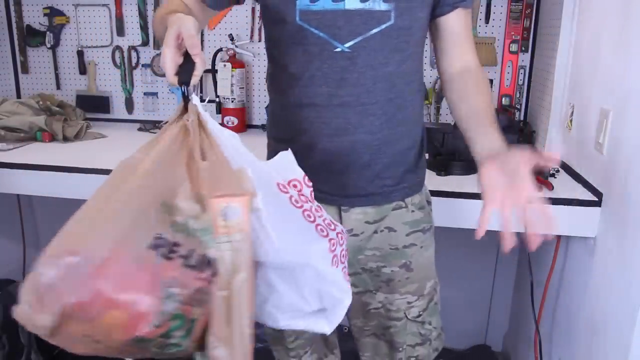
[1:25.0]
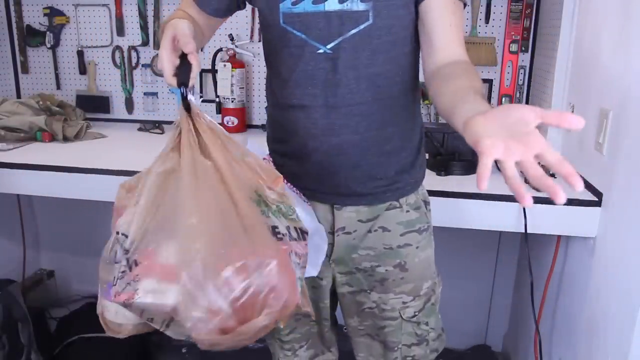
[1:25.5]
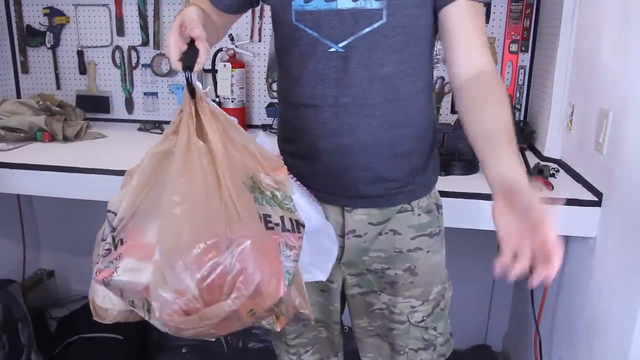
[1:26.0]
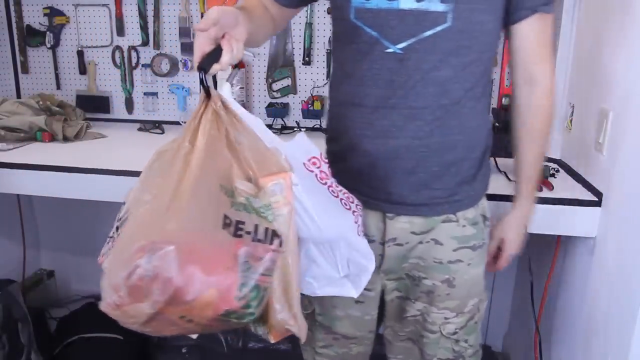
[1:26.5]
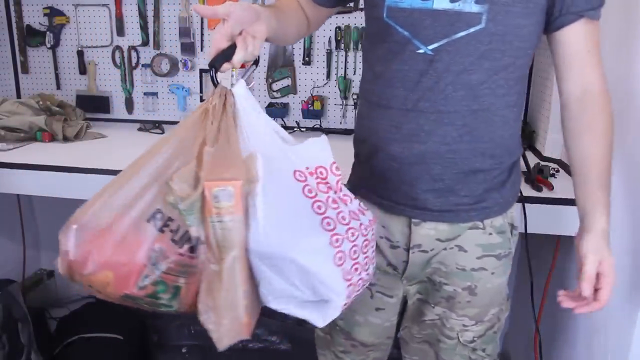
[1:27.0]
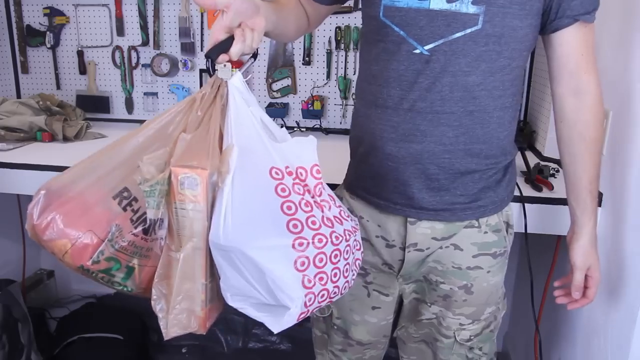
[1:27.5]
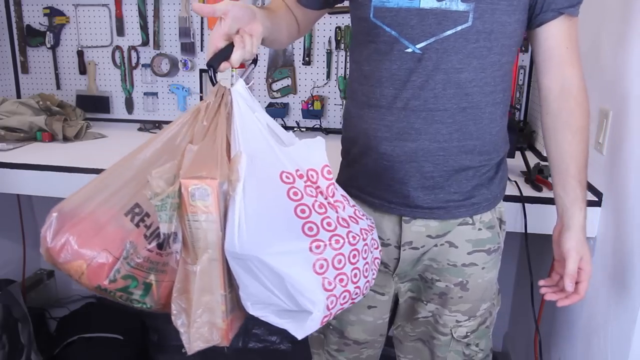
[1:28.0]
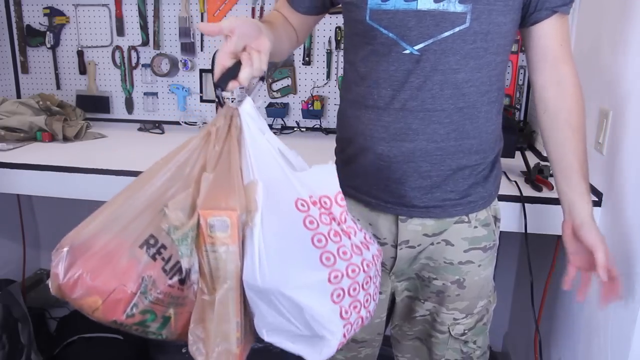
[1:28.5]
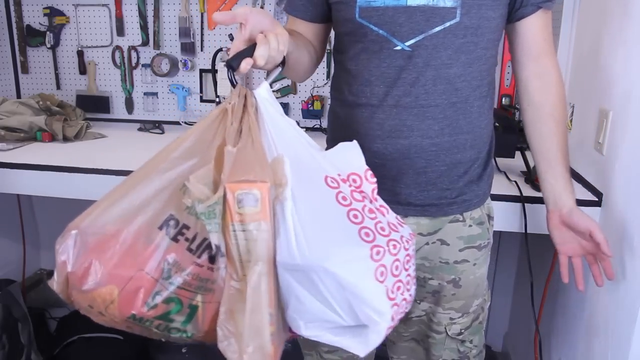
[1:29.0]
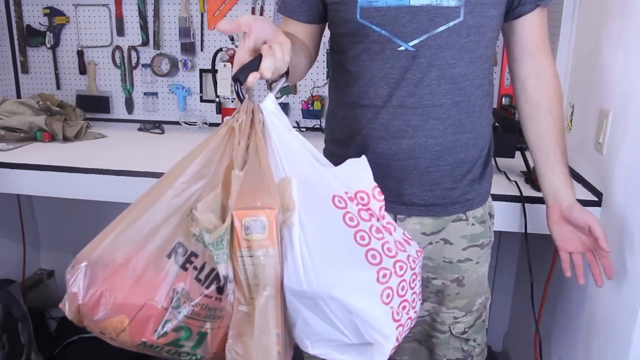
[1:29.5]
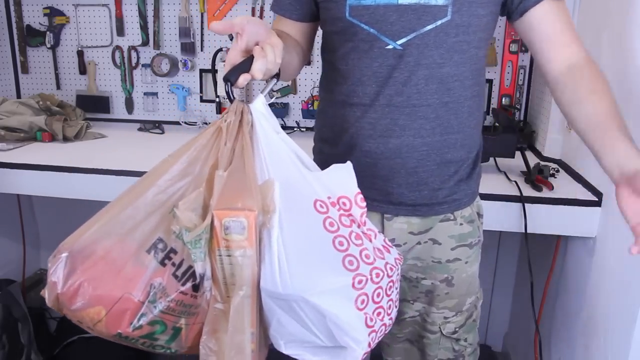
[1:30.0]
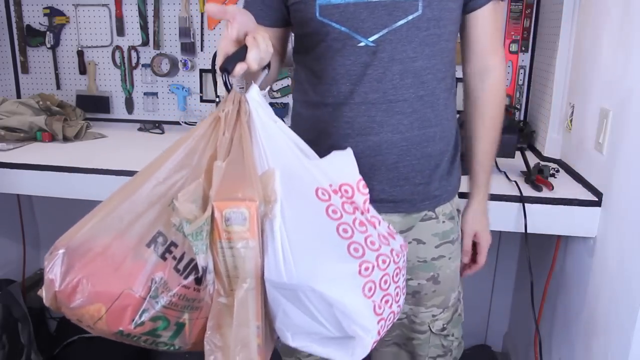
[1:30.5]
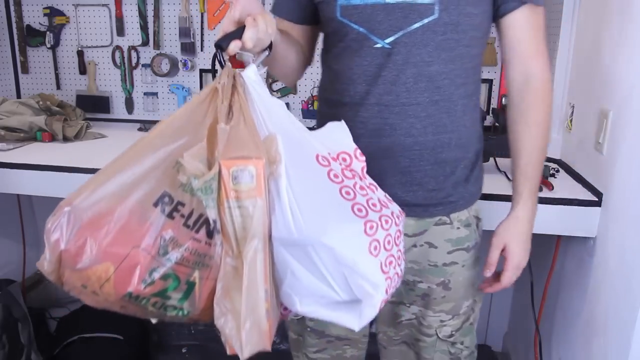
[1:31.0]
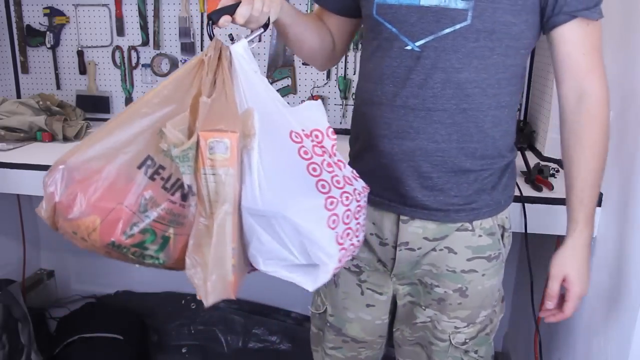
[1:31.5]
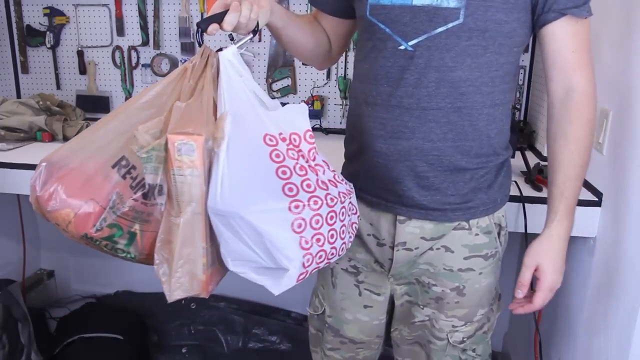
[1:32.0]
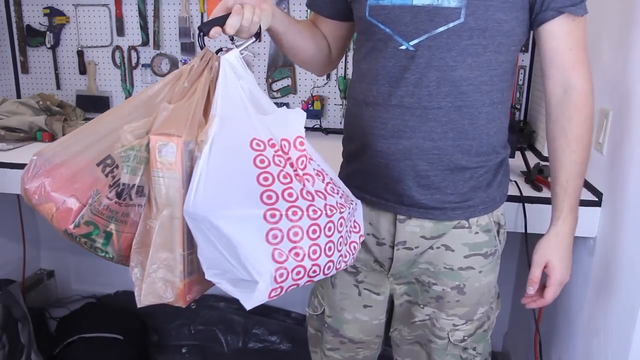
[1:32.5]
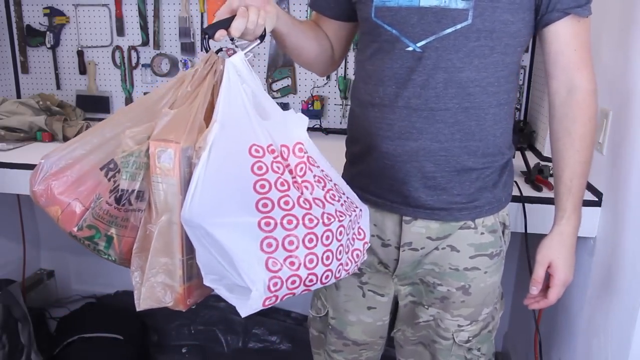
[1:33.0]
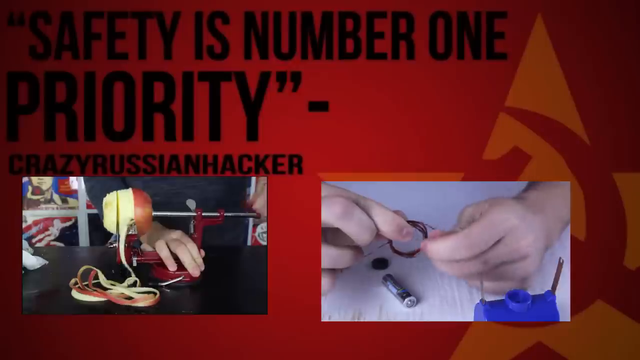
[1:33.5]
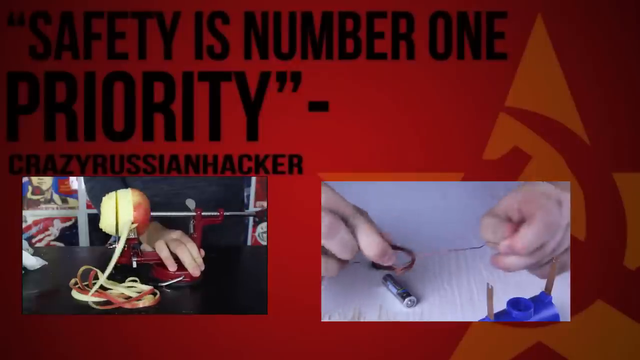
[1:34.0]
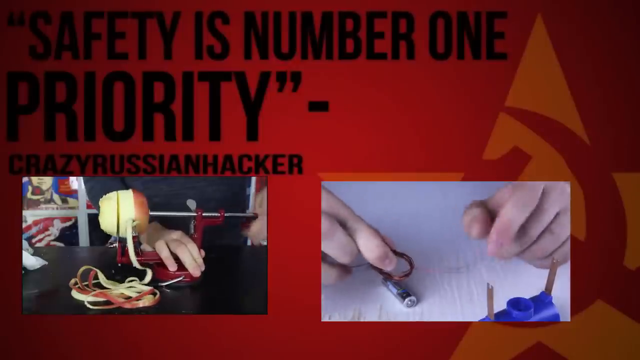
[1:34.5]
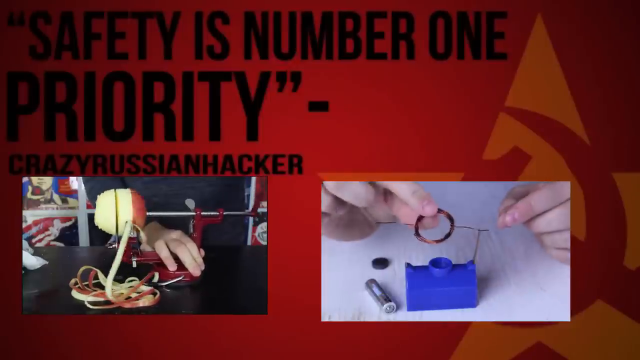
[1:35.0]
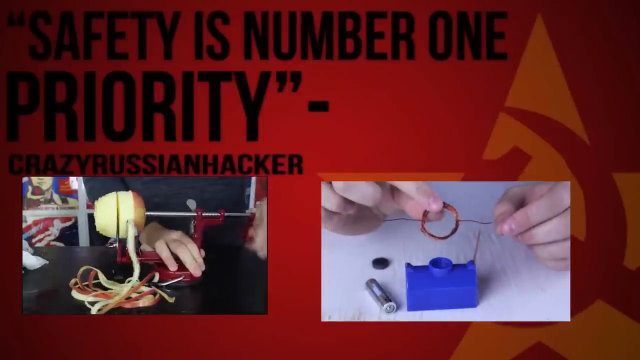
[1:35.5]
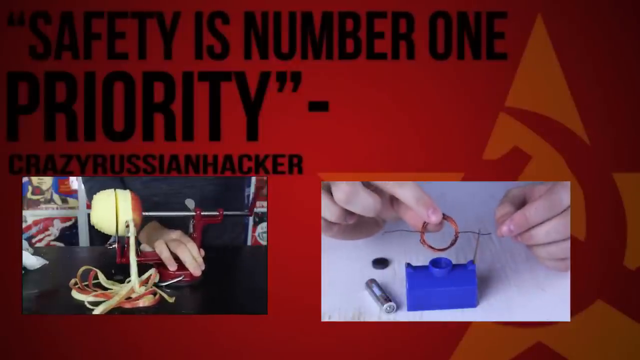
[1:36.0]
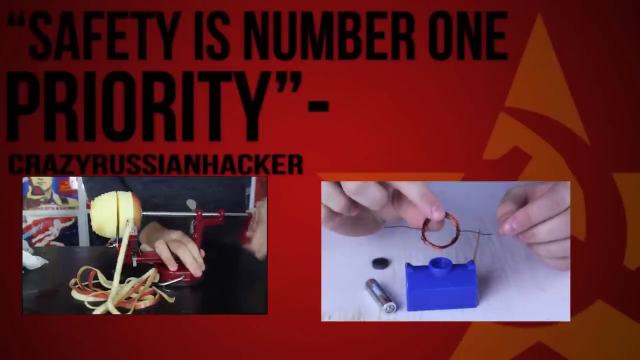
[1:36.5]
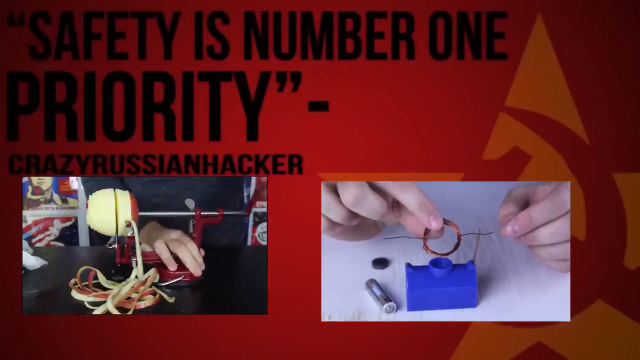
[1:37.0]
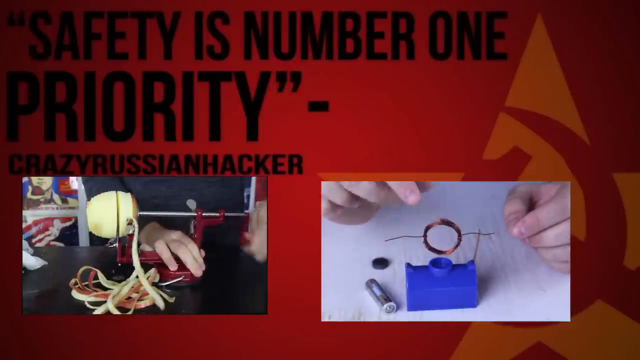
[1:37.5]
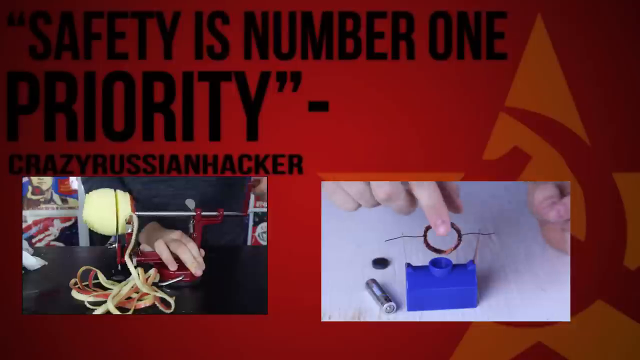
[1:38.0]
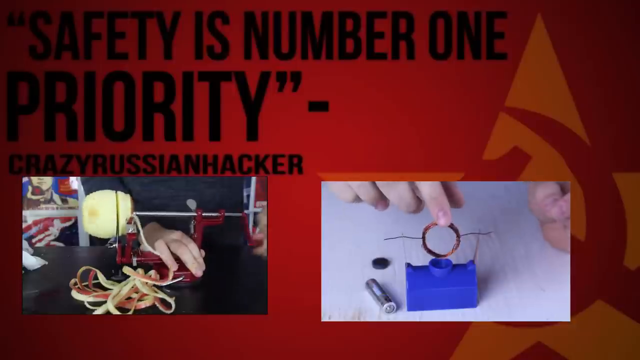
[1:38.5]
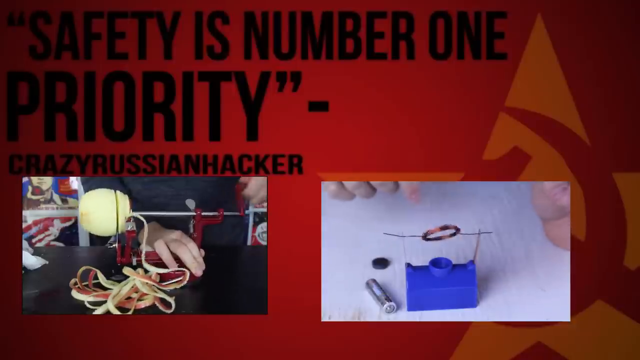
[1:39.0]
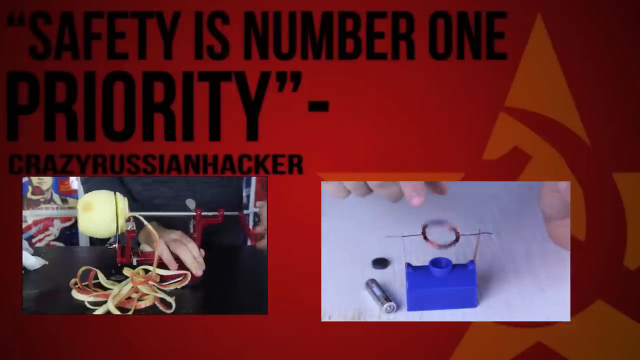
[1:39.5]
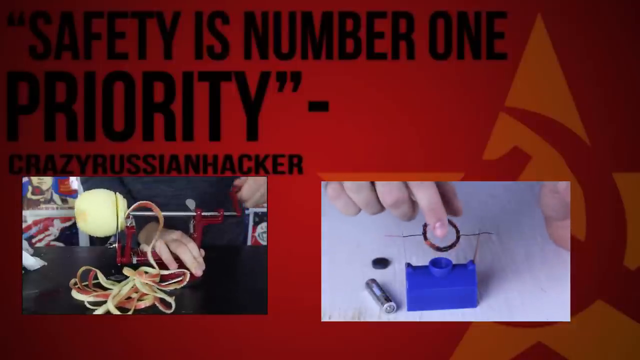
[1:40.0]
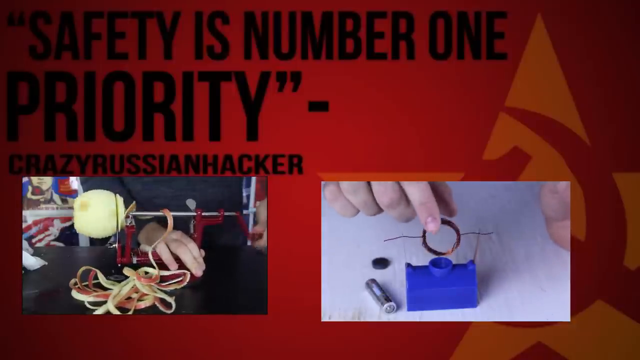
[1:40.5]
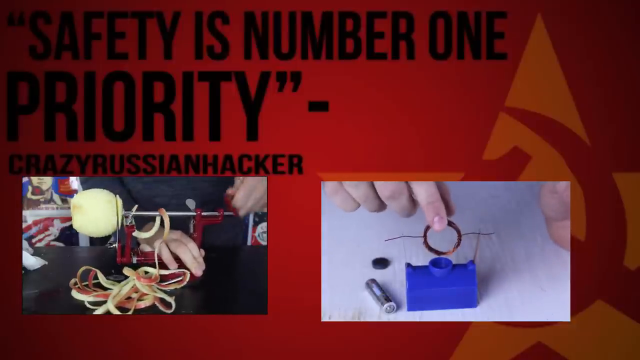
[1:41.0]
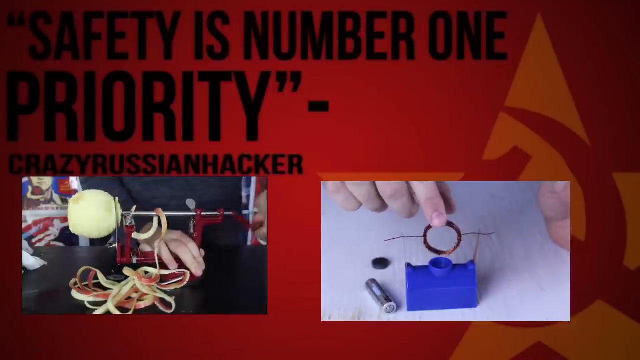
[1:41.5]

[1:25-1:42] The person has the bag suspended in the air, showing how a large number of bags from a grocery store or market can be carried with the tool. They gesture, seemingly explaining the benefits of the process. The video then moves to an outro graphic showing two of their other videos playing, with the quote "safety is number one priority by the crazy Russian hacker". The background is red with the hammer and sickle encased in the star symbol from the beginning of the video.